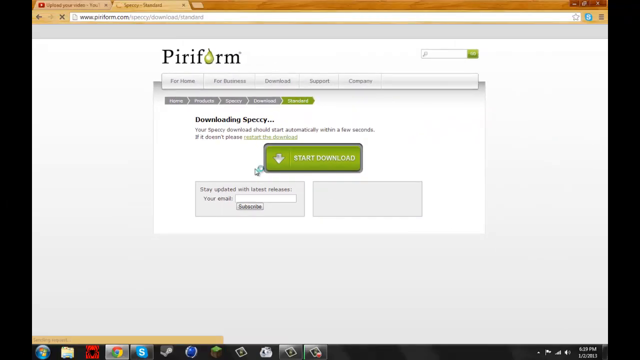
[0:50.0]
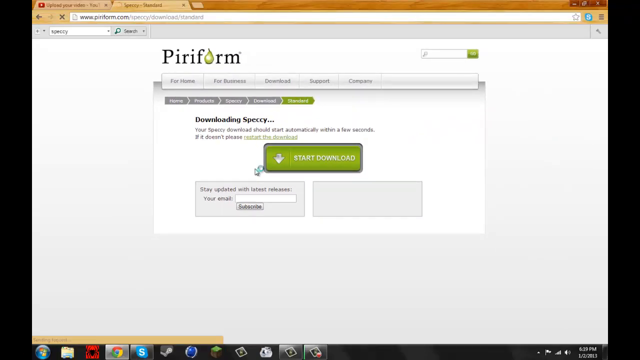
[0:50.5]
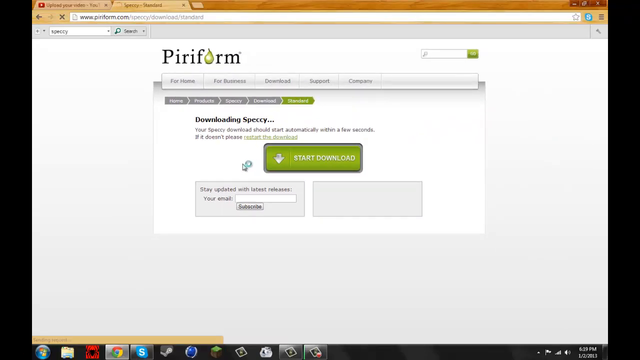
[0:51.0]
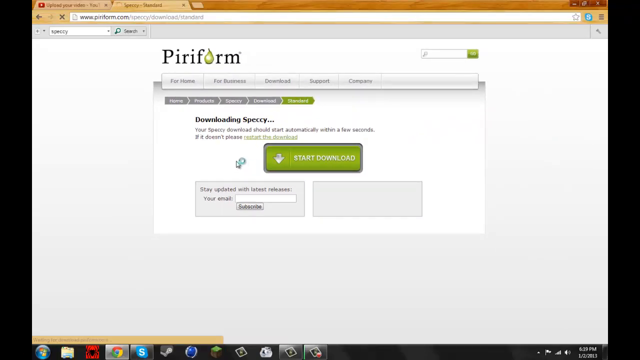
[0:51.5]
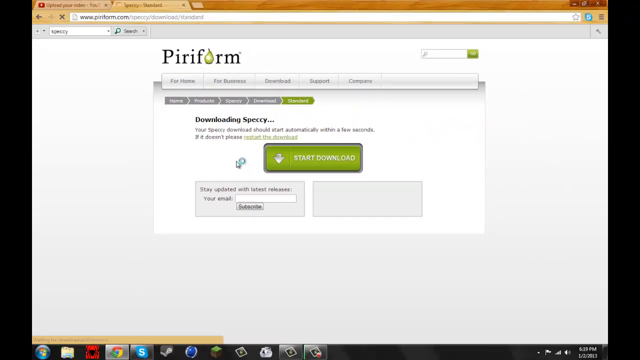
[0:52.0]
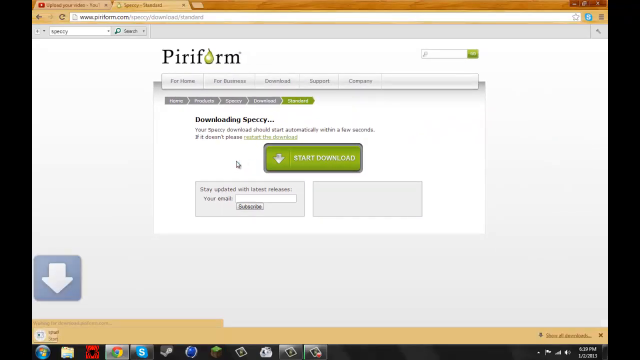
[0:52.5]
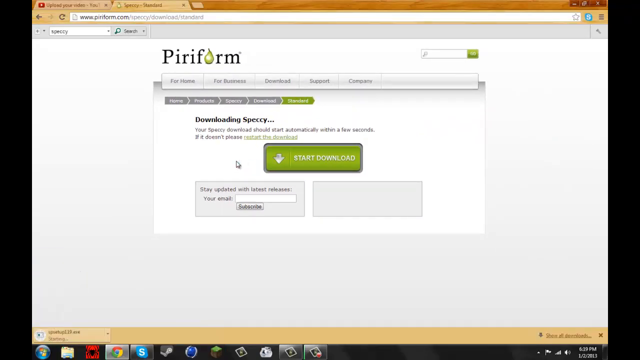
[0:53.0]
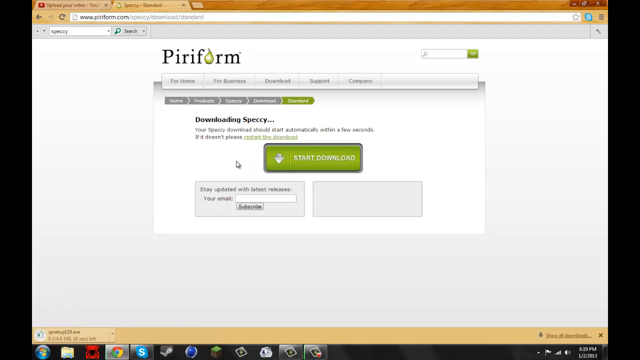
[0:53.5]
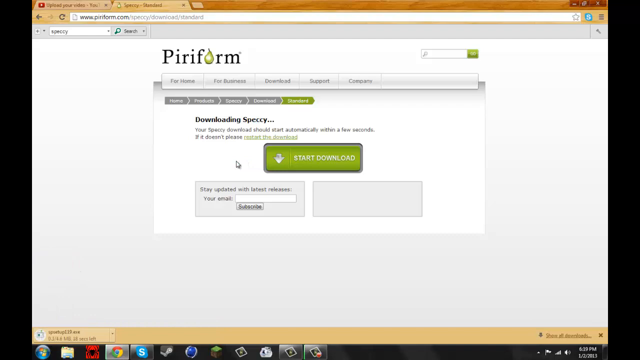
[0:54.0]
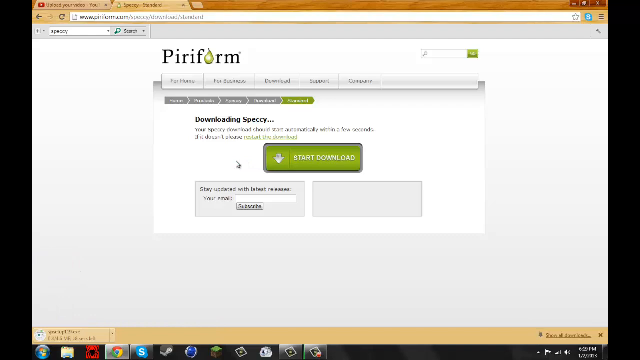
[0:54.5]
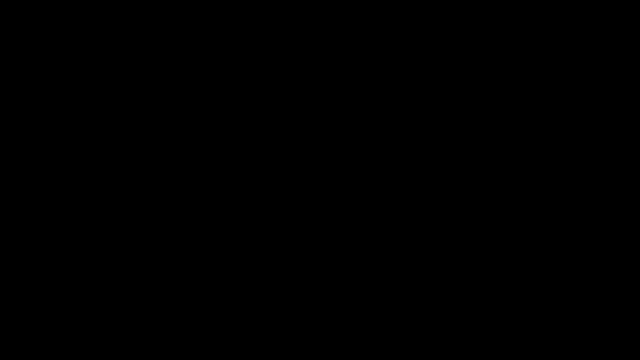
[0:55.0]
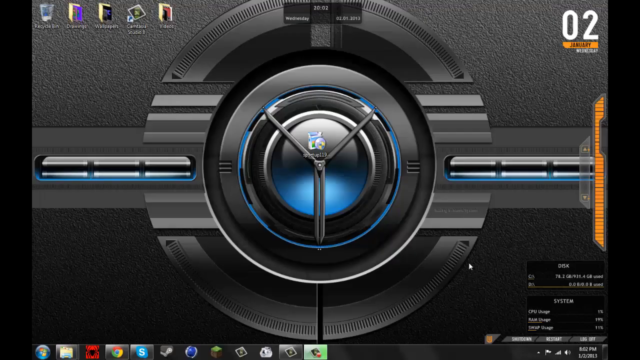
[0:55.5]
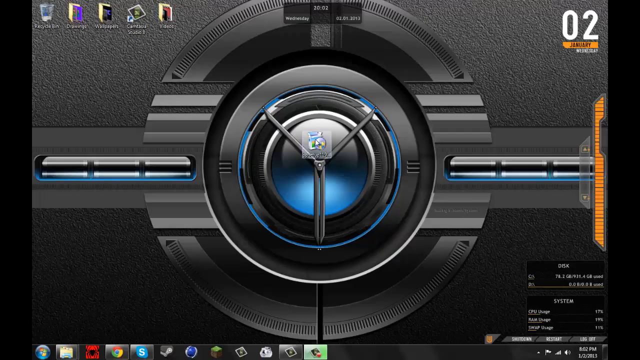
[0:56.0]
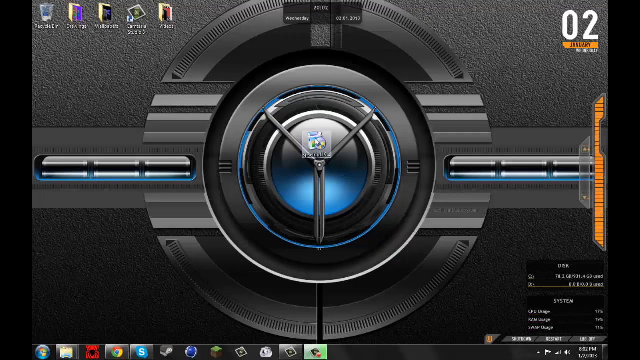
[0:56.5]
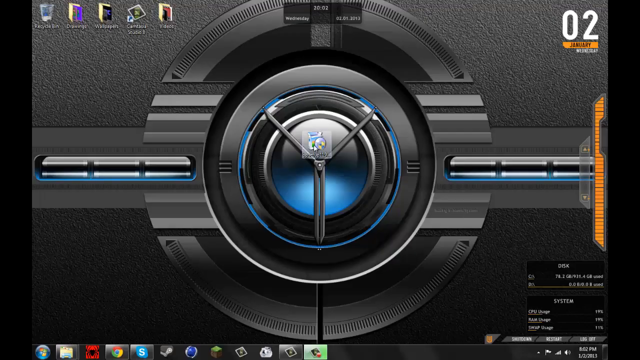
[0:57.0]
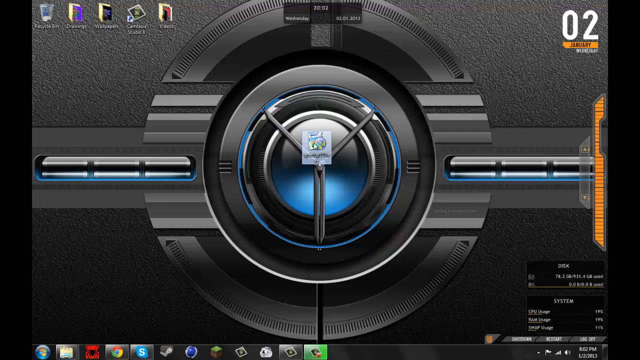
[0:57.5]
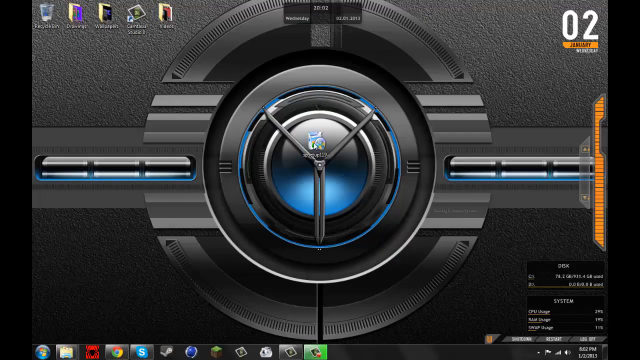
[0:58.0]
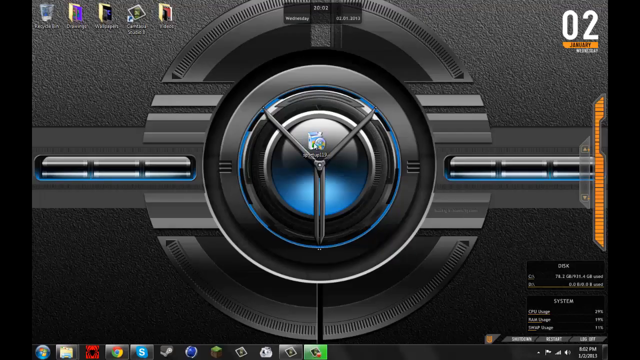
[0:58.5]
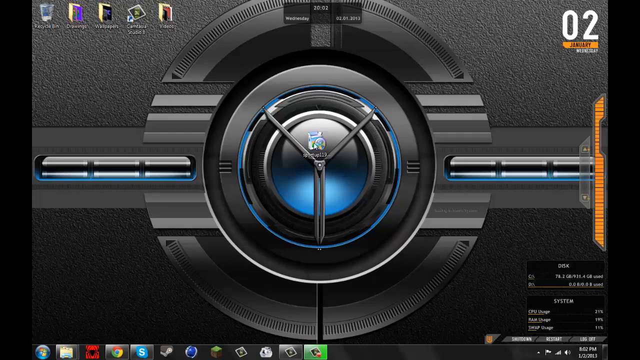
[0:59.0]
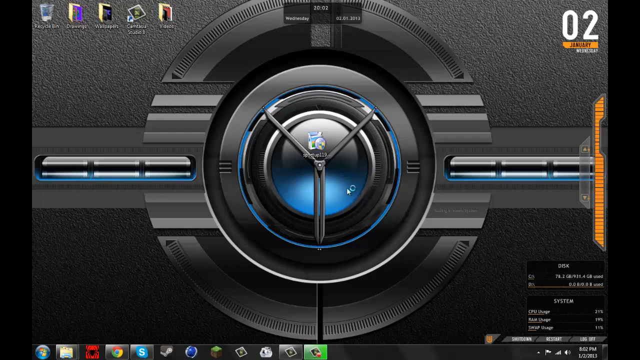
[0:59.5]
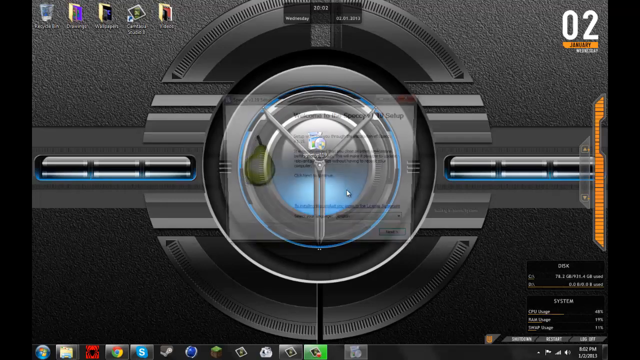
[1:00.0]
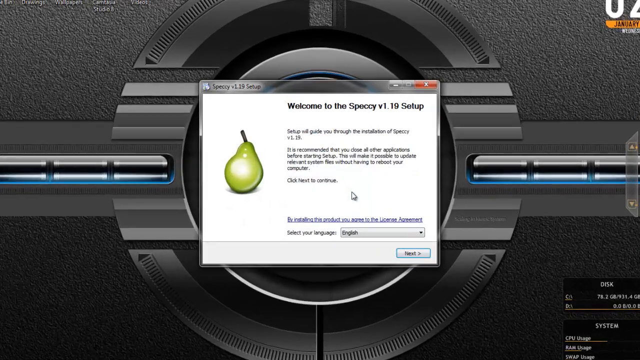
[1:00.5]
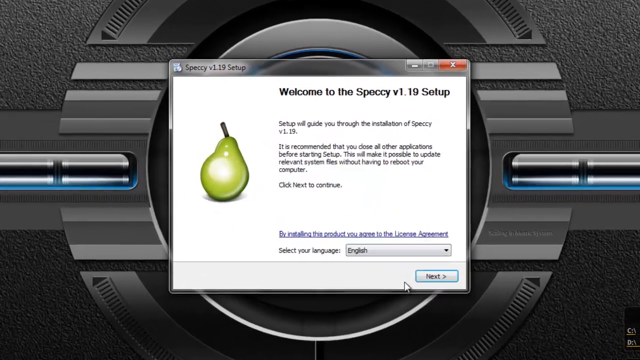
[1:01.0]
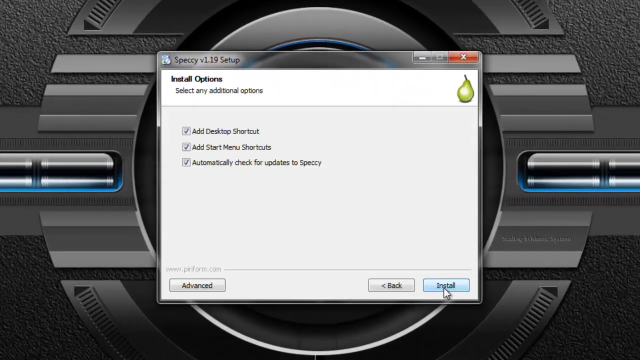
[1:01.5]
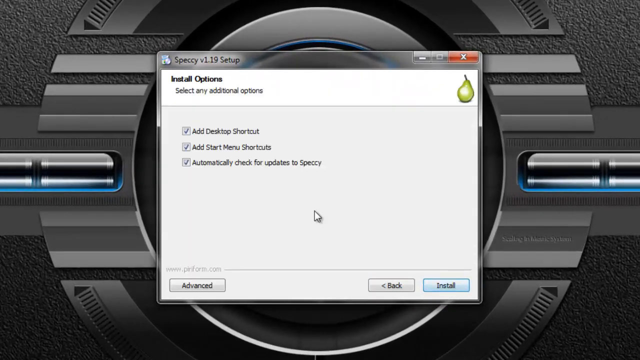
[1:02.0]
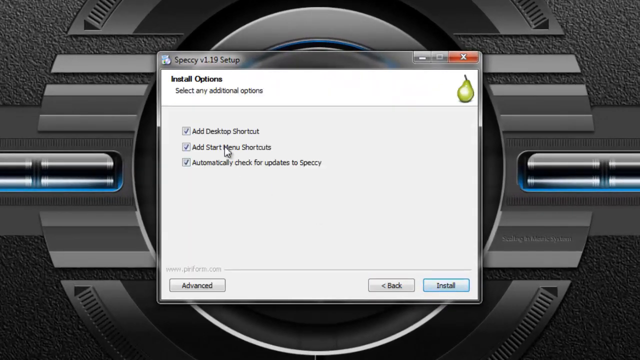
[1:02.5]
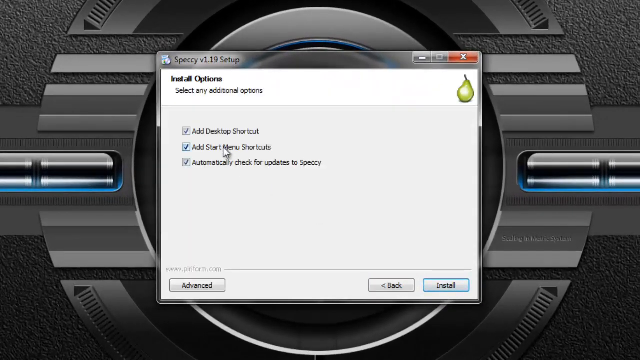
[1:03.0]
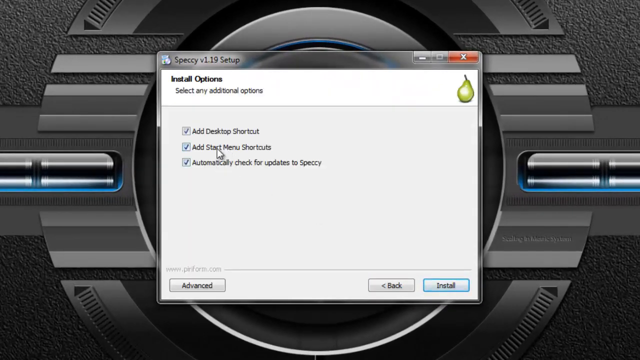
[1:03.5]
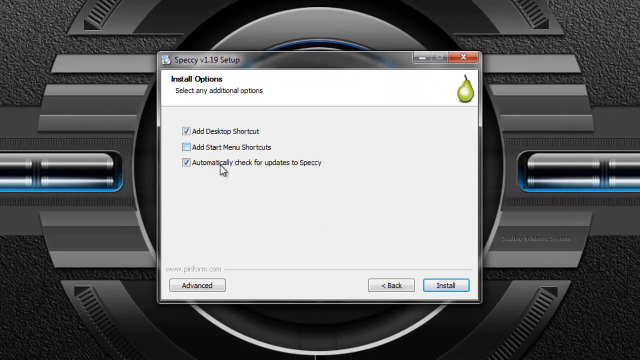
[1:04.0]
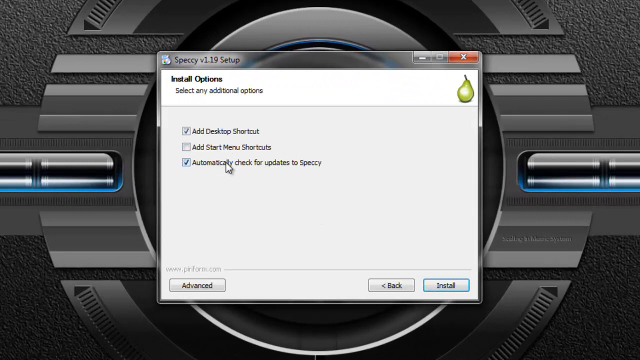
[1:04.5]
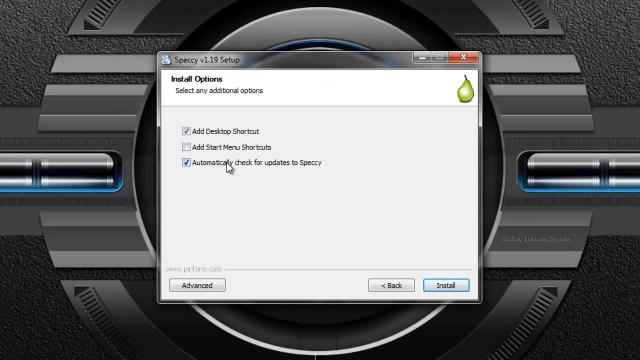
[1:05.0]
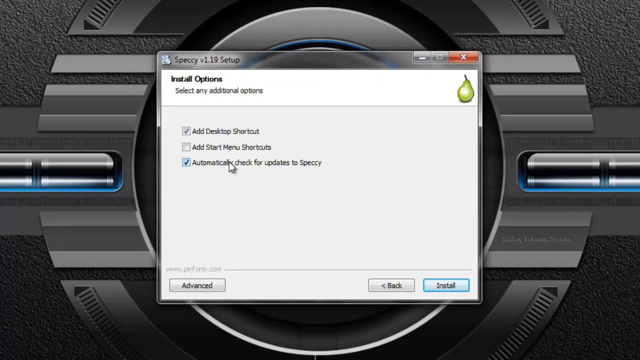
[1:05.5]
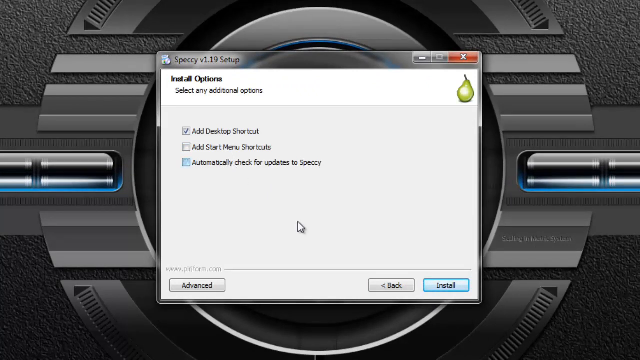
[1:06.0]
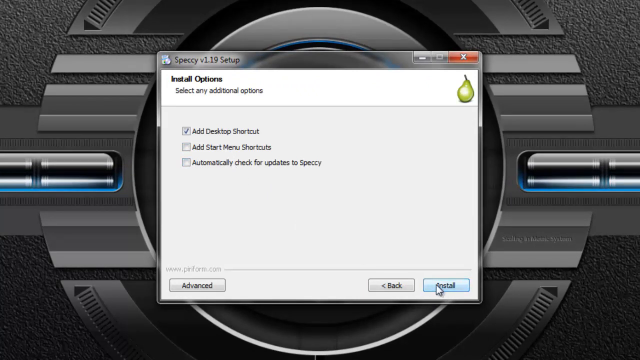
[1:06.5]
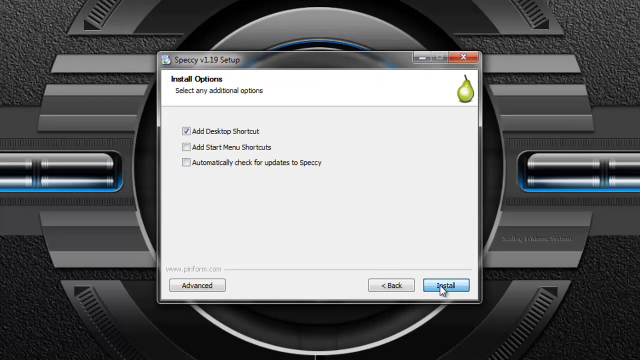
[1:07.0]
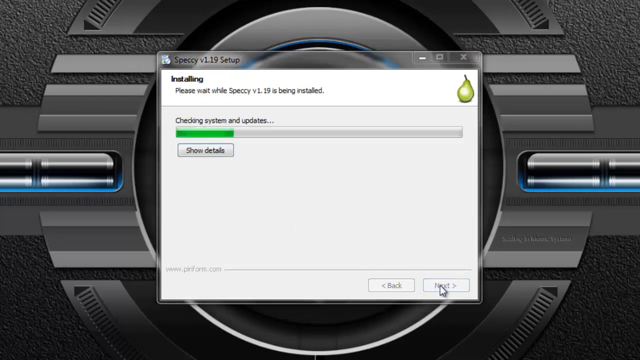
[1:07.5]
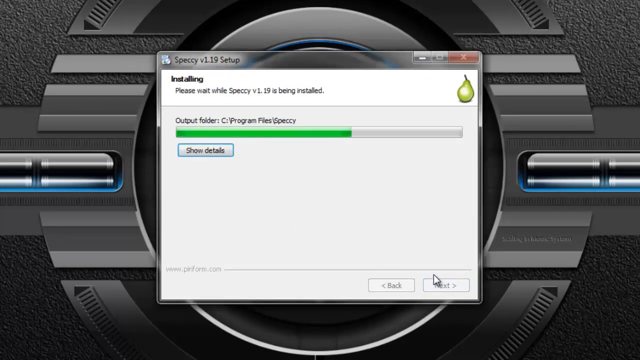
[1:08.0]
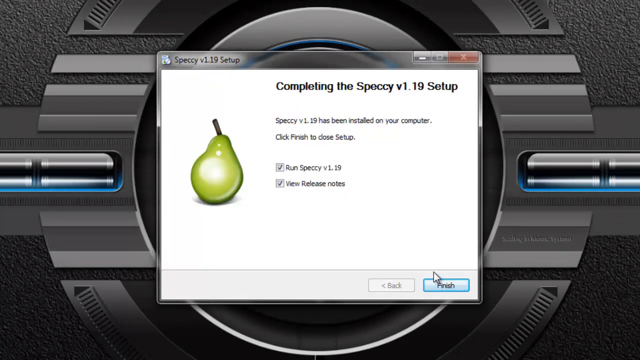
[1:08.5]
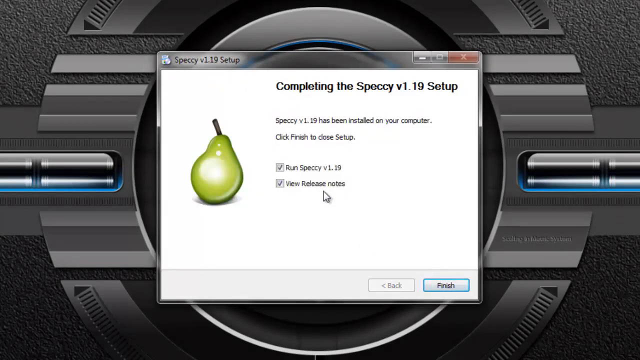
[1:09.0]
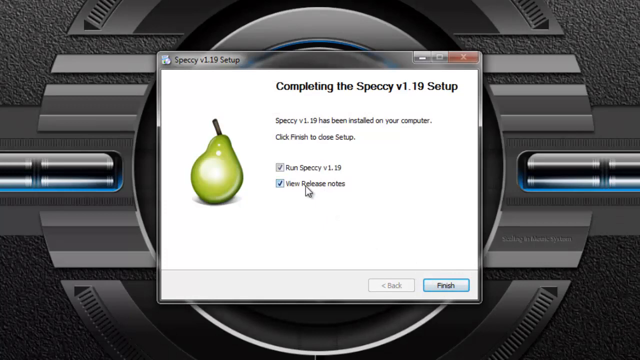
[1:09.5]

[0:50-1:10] The Pryor Forum website is open, and the user appears to be about to download the Specacy app. The EXE appears to have downloaded and is on the desktop, and the user clicks it. Install options appear: add desktop shortcut, add start menu shortcut, and automatically check for updates. He unchecks add start menu shortcut and automatically check for updates, then clicks install. The installation finishes very quickly, and a box appears that says "completing the Specacy version 1.19 setup," with options to run Specacy version 1.19 and view release notes.